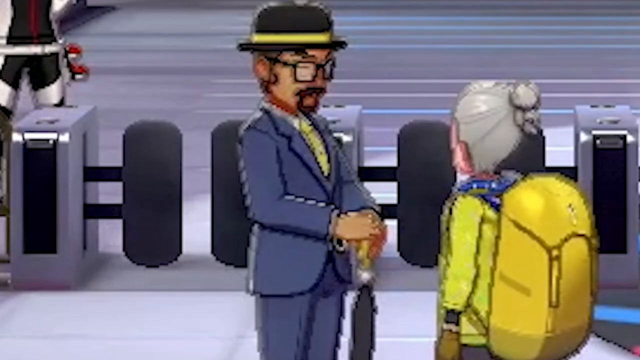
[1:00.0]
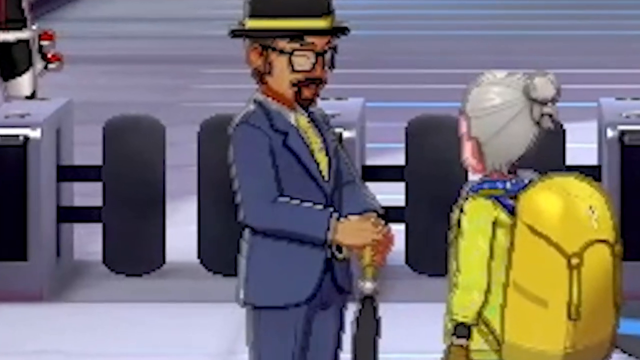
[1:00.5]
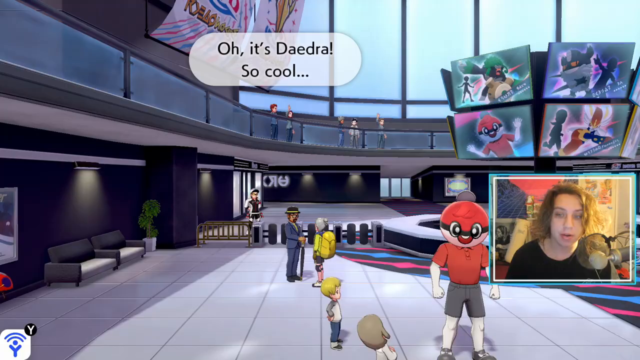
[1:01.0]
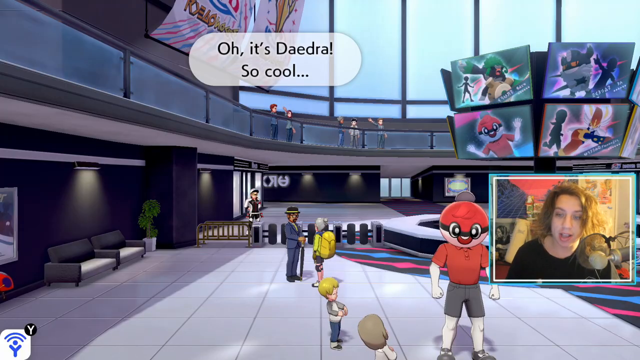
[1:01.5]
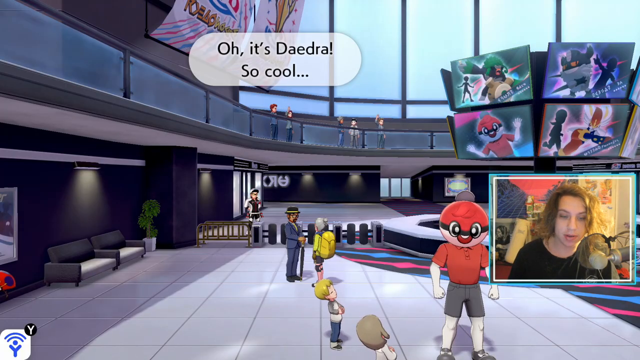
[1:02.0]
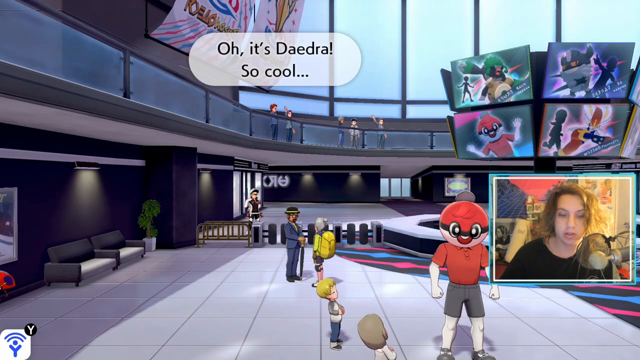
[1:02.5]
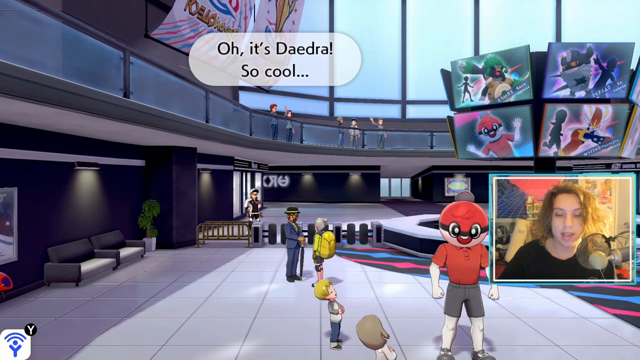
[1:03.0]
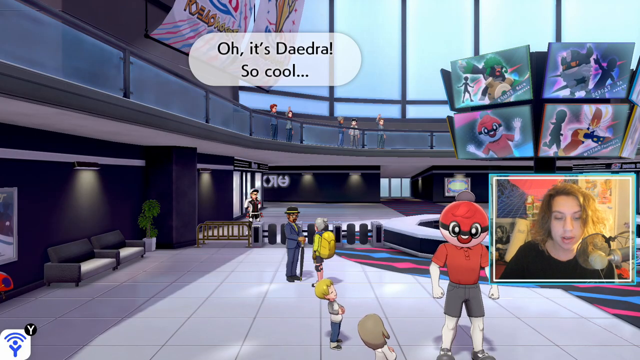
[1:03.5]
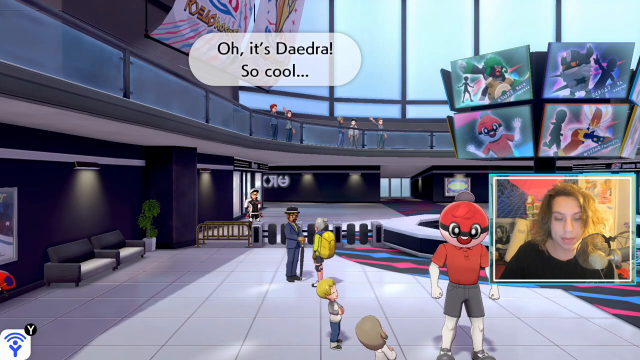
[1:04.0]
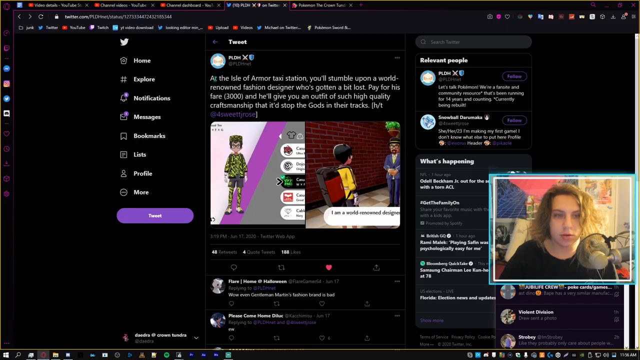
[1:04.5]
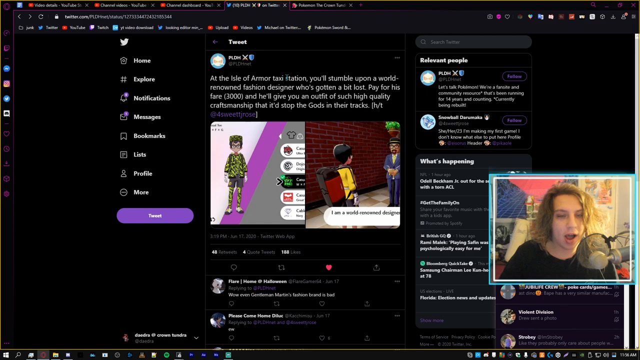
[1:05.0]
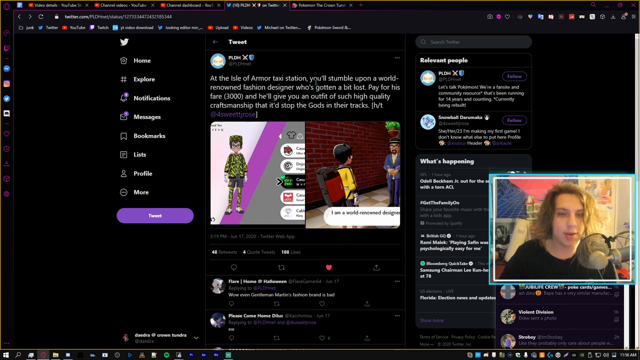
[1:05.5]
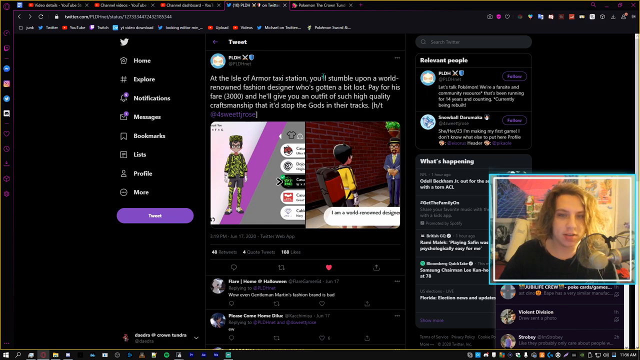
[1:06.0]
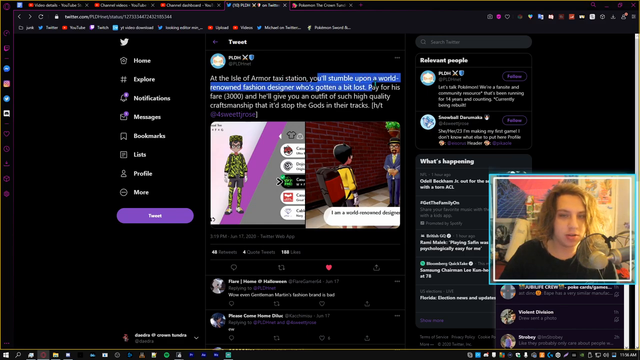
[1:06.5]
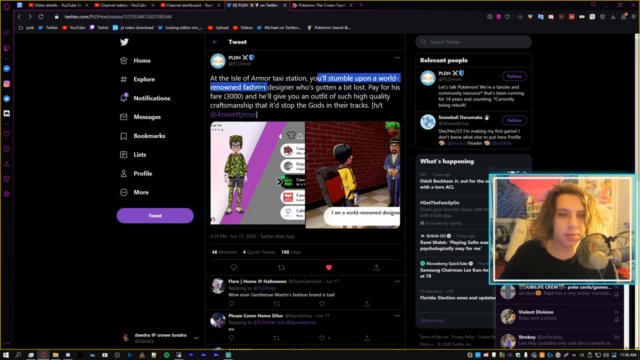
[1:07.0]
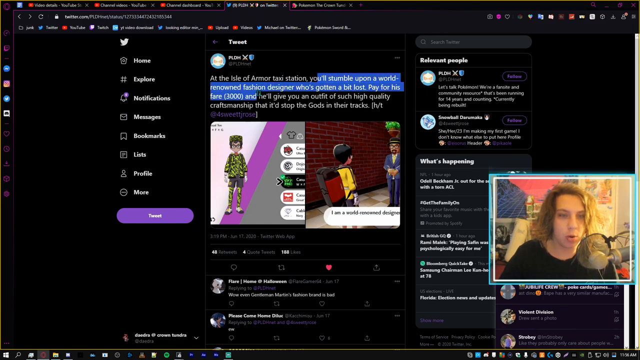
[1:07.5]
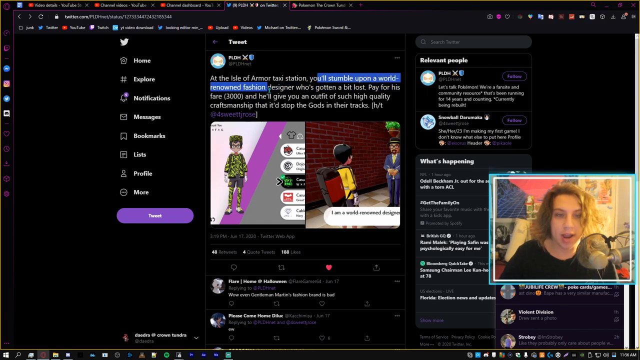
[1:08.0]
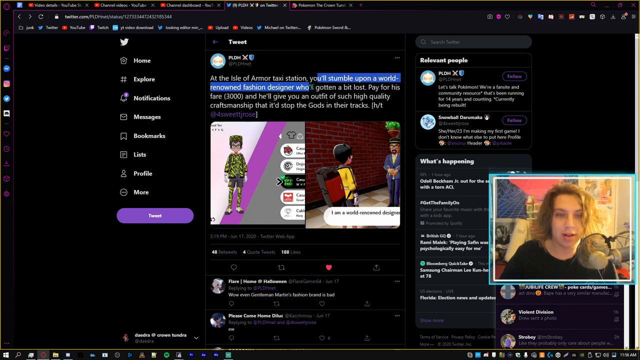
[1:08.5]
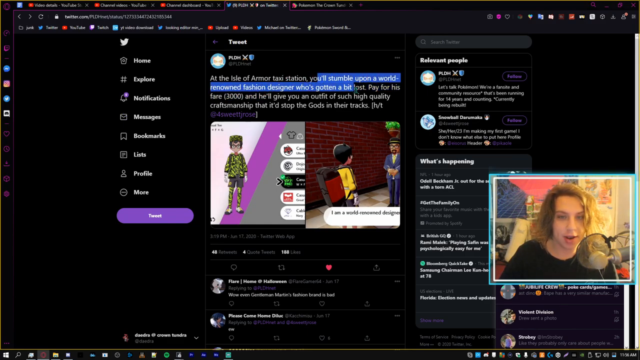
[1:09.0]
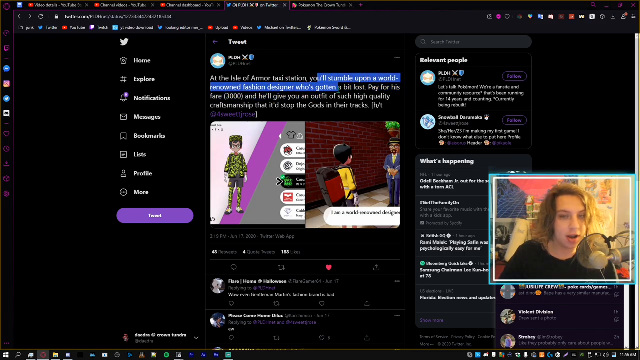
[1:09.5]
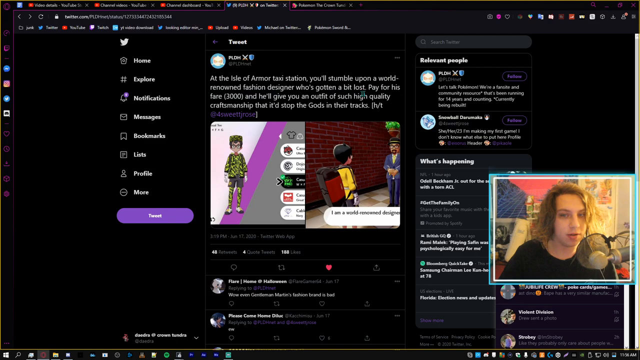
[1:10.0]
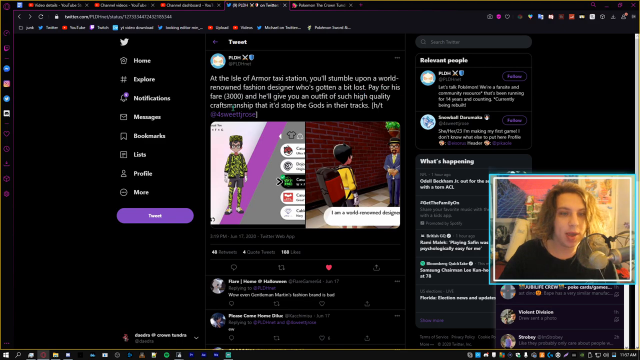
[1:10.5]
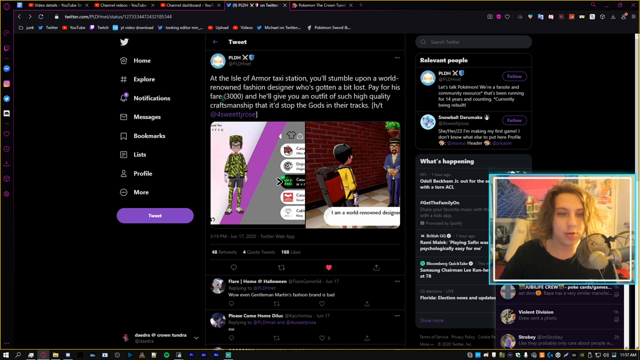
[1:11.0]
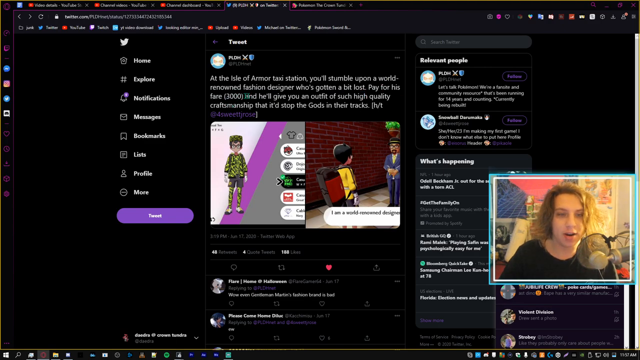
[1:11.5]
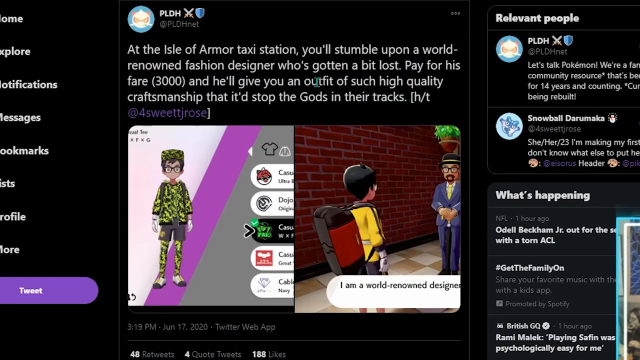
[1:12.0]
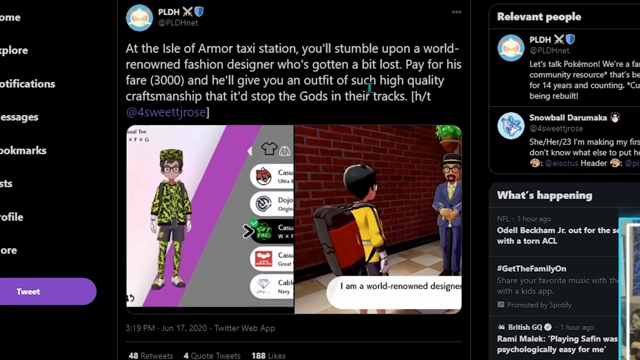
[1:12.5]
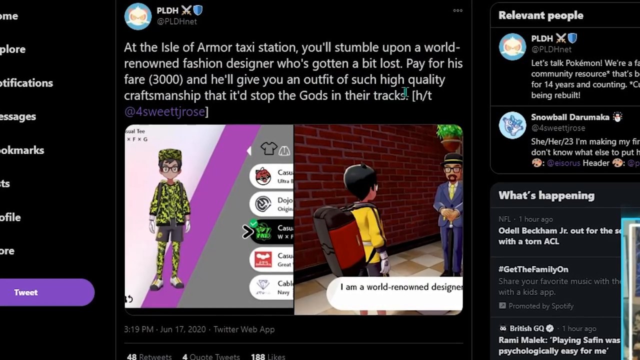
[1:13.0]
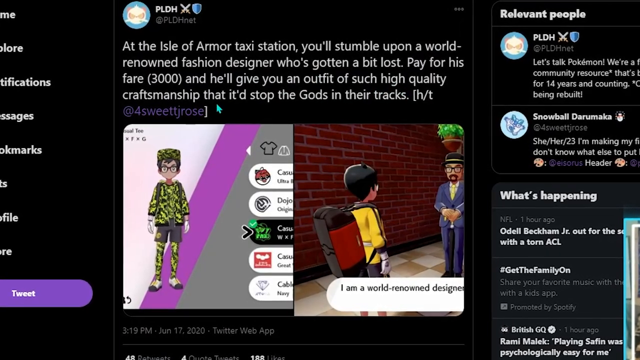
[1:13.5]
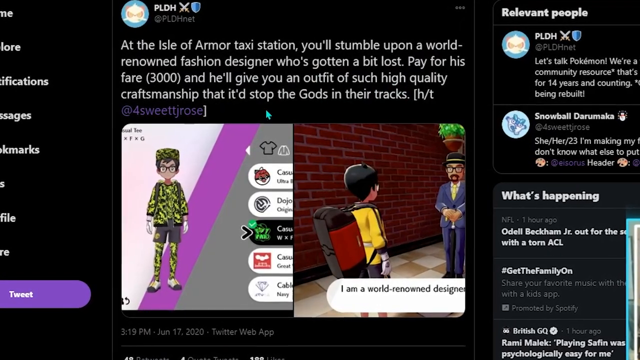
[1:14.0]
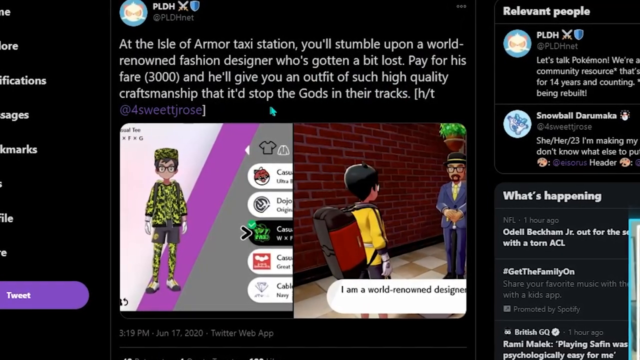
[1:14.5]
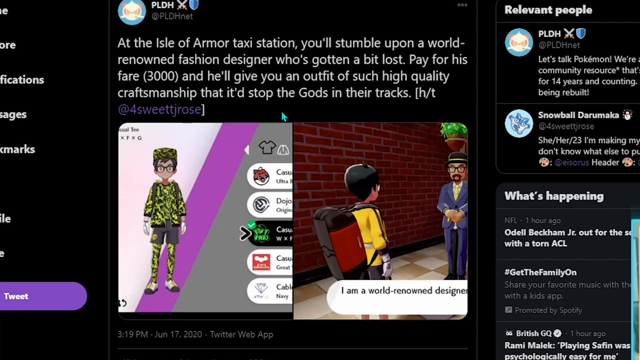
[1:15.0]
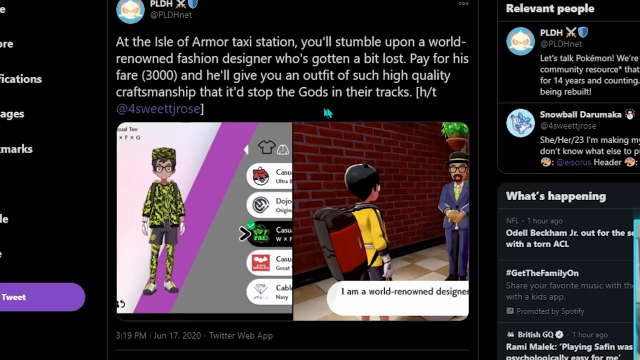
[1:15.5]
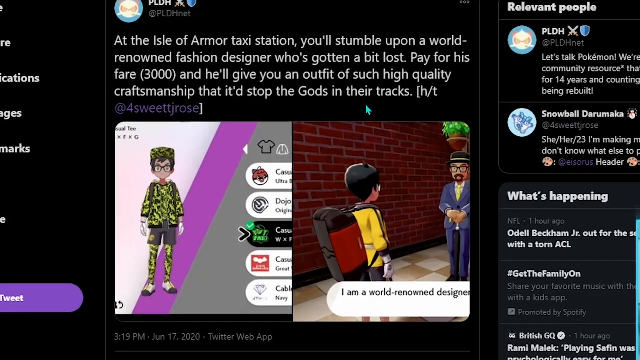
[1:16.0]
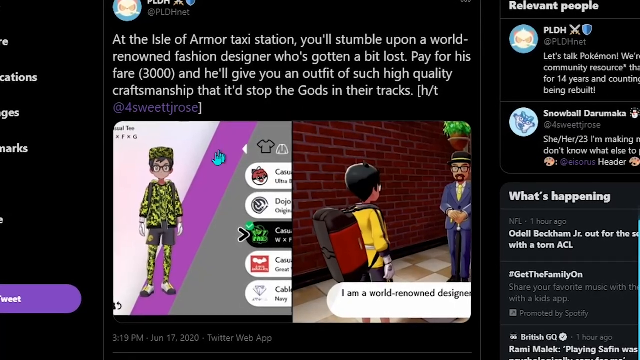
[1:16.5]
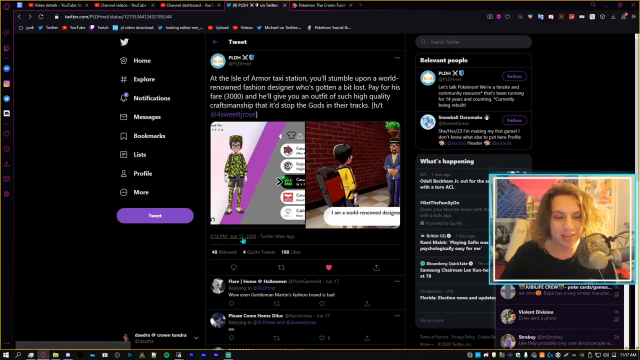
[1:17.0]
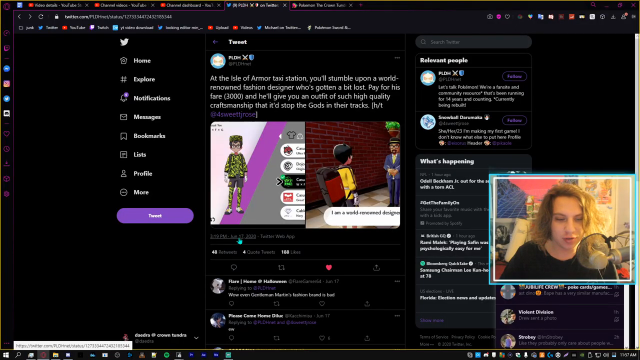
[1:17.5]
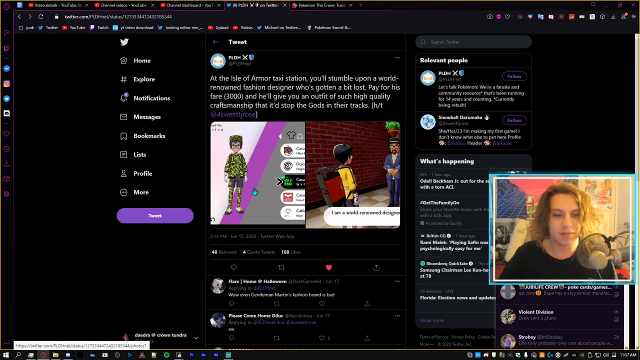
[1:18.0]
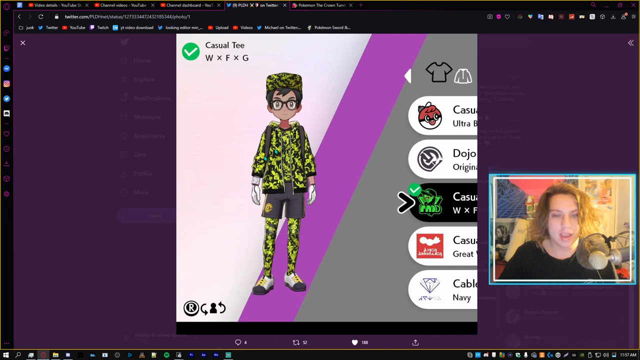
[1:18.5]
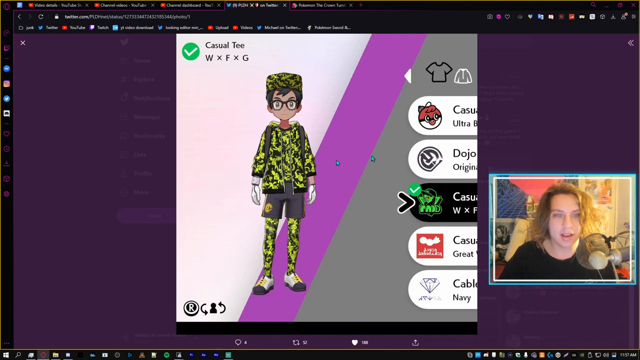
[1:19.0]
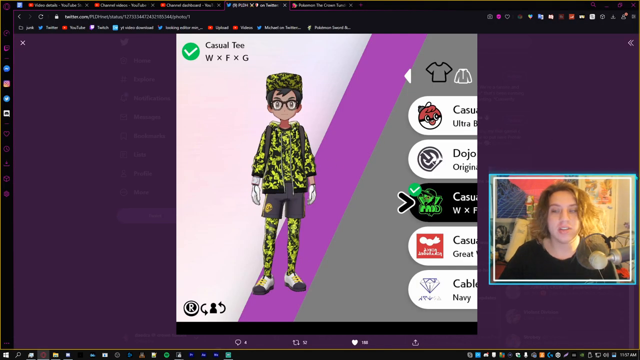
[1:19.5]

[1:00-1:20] The camera is zoomed in on two characters who appear to be about to have dialogue. The first character says, "oh, it's dadra so cool," dadra being the player character's name. The YouTuber in the bottom right corner continues to speak into the microphone. A couple of characters are around as bystanders. The scene cuts to Twitter, showing a tweet about the game that the YouTuber highlights in blue, and the view zooms in on the text: "at the aisle of armor taxi station, you'll stumble upon a world renowned fashion designer has gotten a bit lost. Pay for his fare (3000) and he'll give you an outfit of such high quality craftsmanship that it stopped the gods in their tracks." The tweet shows the character talking to the man in the fedora. The YouTuber continues to speak into the microphone briefly.